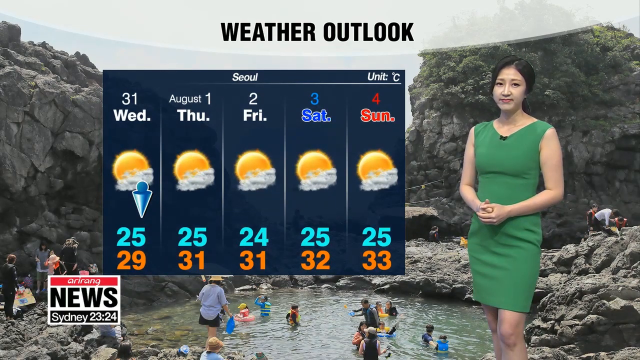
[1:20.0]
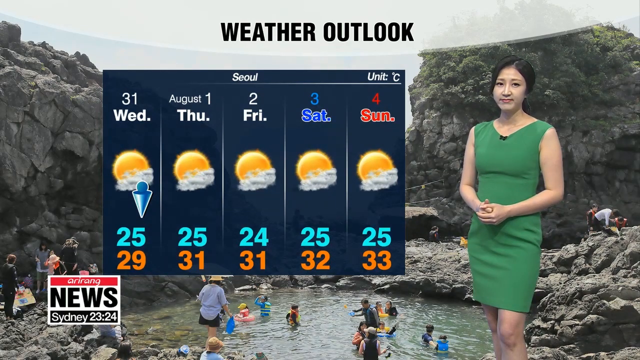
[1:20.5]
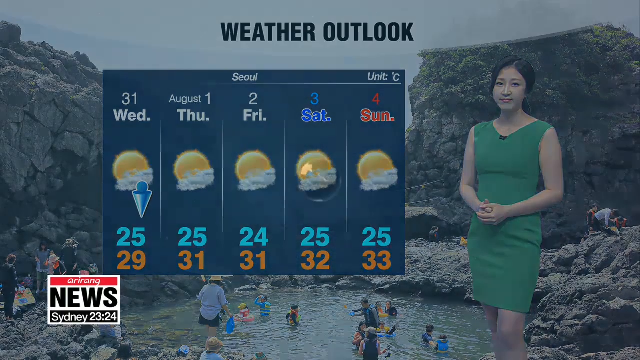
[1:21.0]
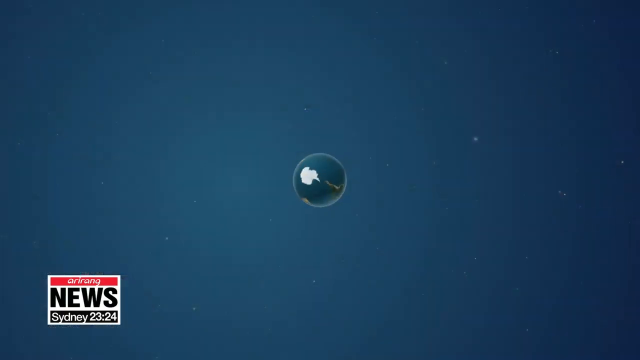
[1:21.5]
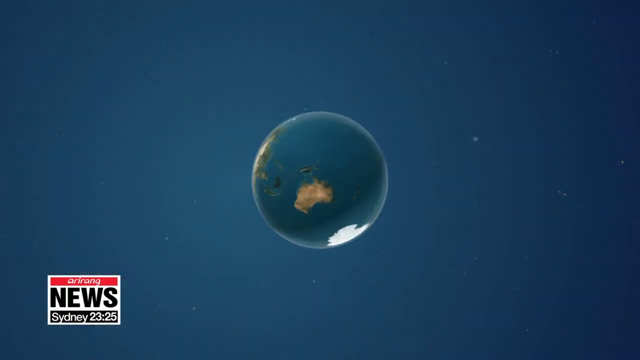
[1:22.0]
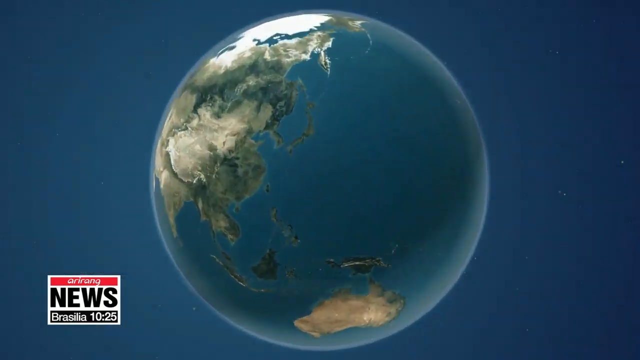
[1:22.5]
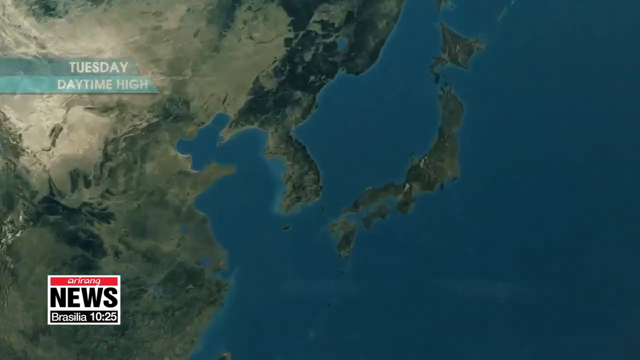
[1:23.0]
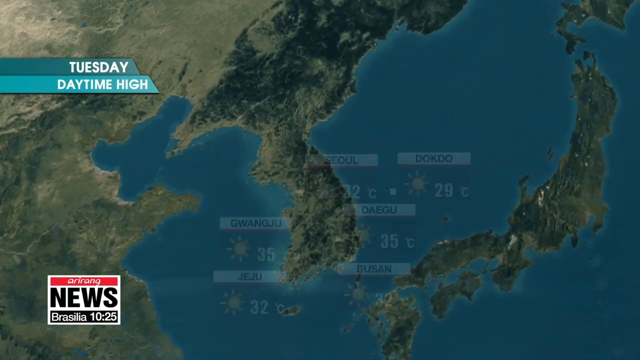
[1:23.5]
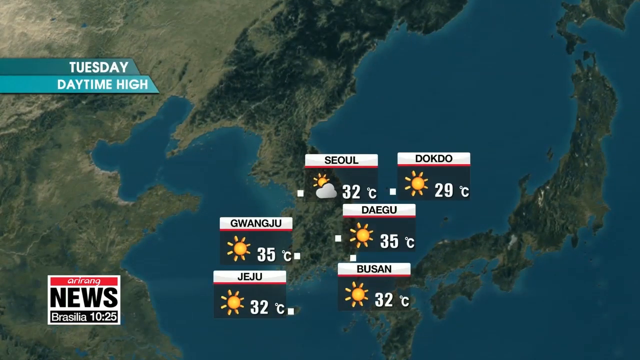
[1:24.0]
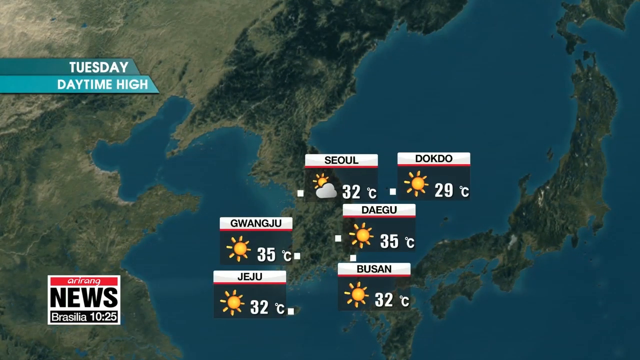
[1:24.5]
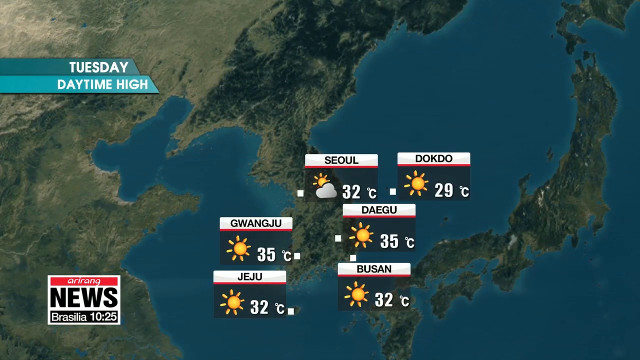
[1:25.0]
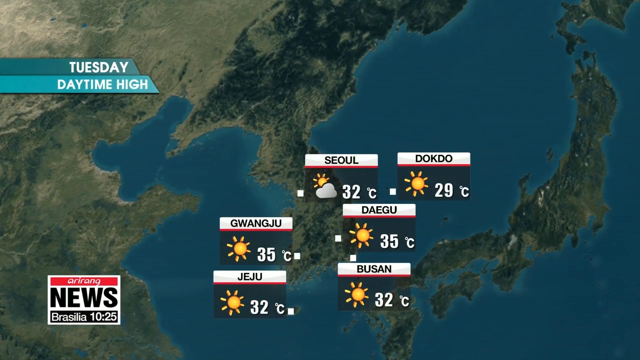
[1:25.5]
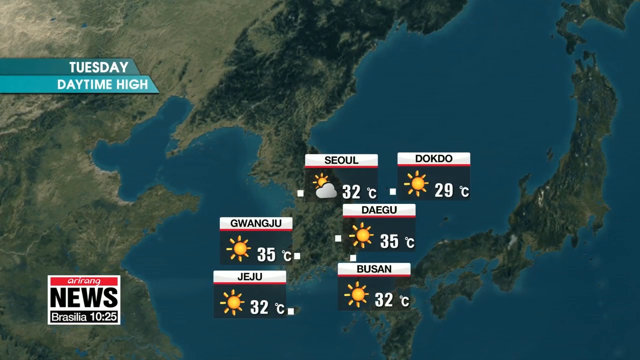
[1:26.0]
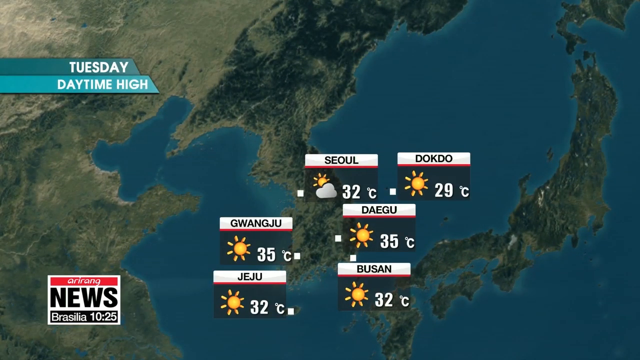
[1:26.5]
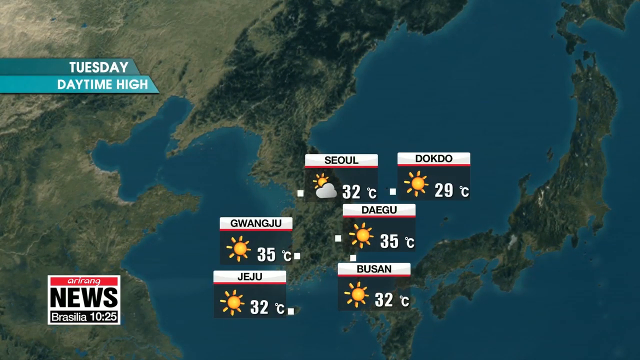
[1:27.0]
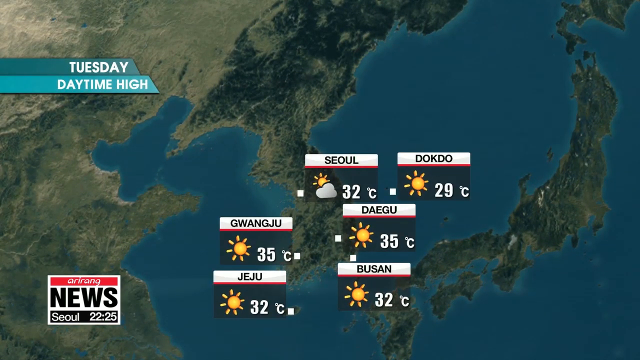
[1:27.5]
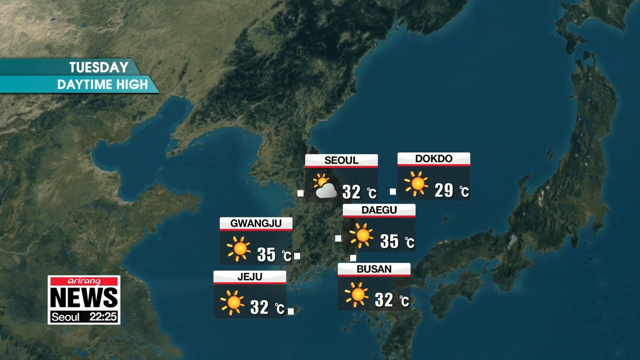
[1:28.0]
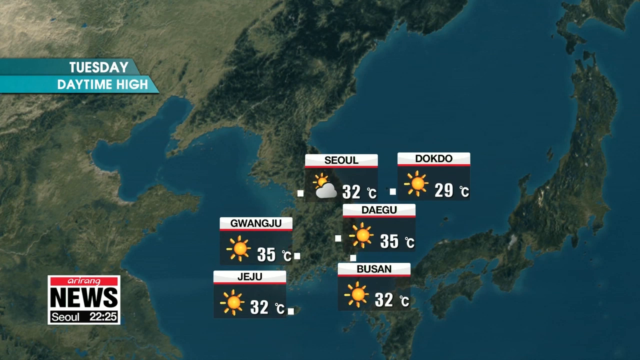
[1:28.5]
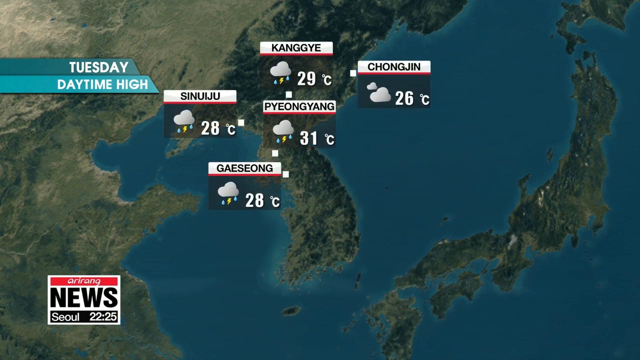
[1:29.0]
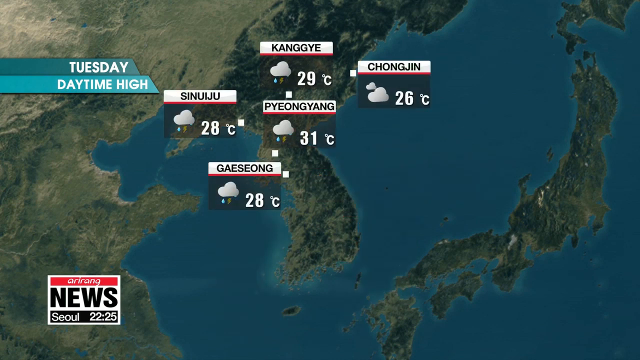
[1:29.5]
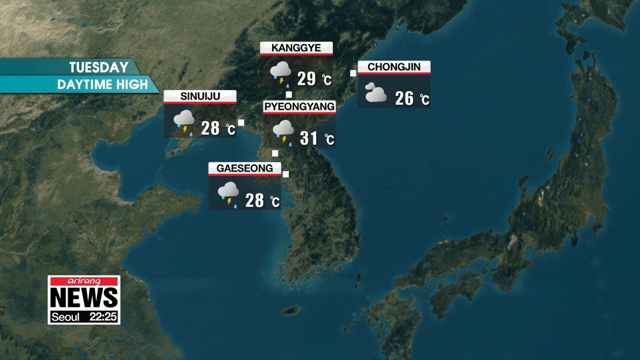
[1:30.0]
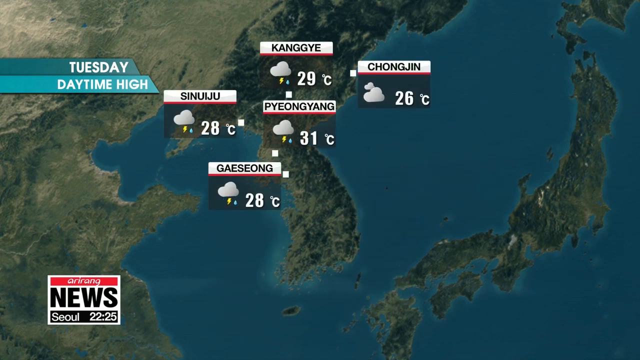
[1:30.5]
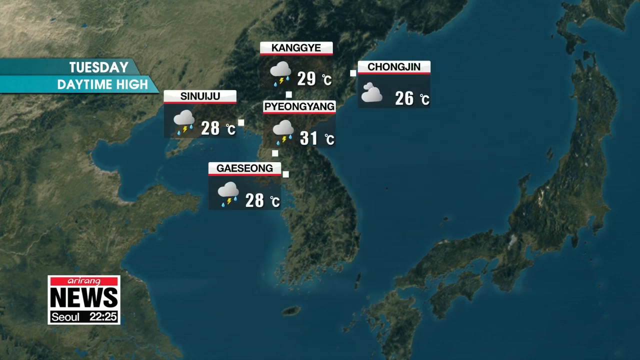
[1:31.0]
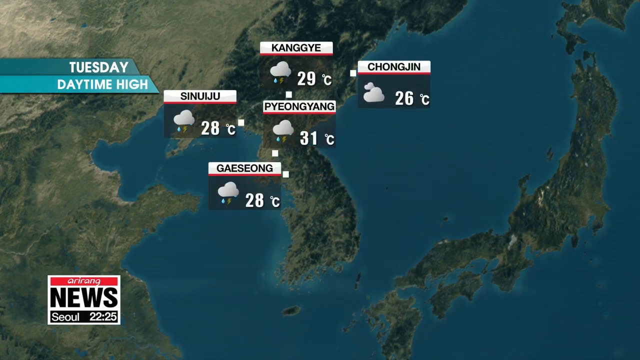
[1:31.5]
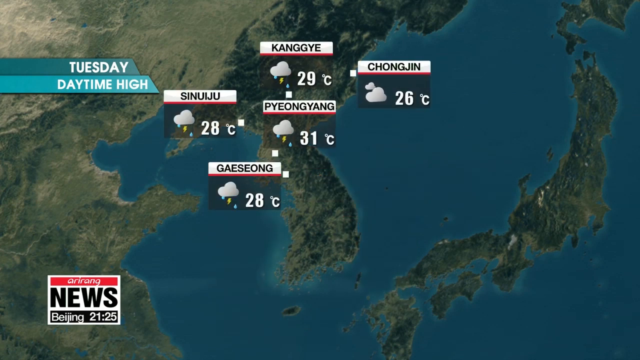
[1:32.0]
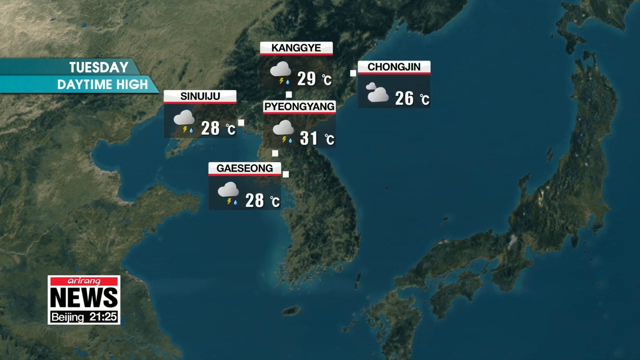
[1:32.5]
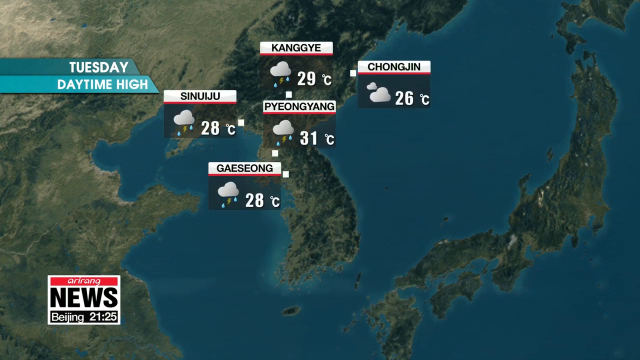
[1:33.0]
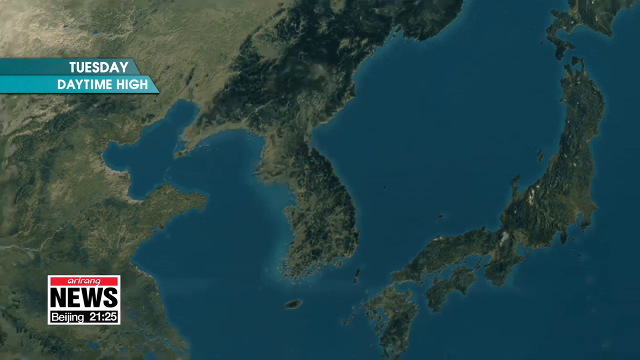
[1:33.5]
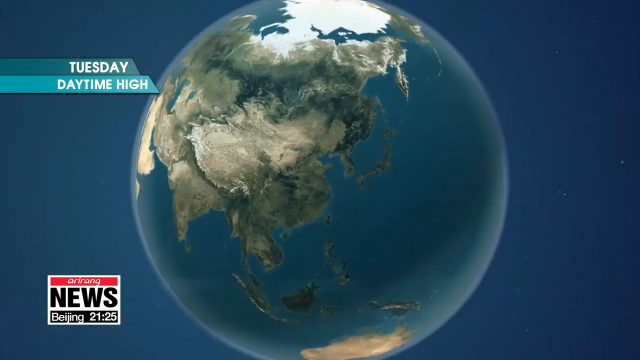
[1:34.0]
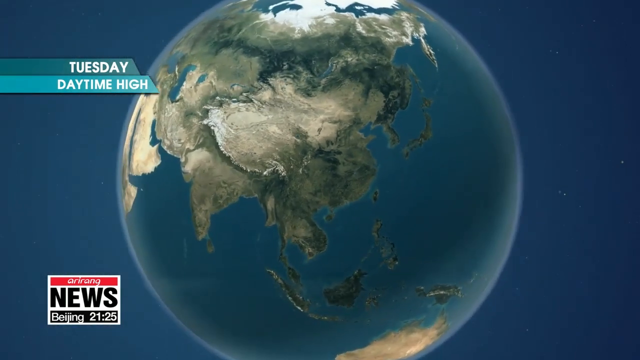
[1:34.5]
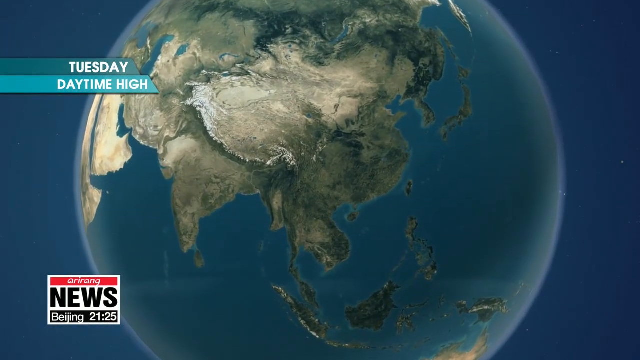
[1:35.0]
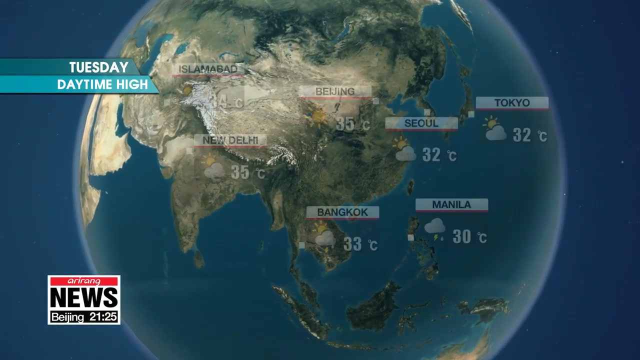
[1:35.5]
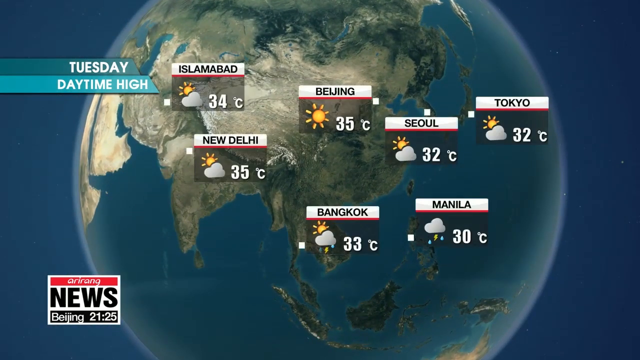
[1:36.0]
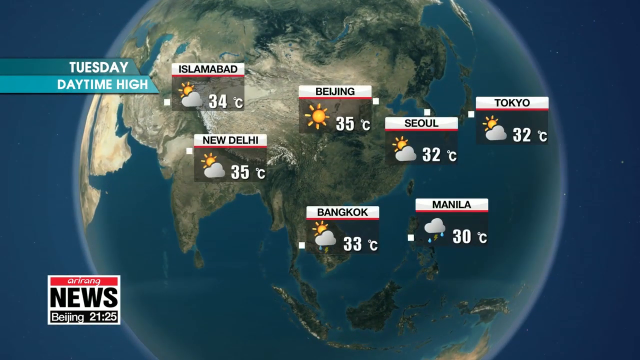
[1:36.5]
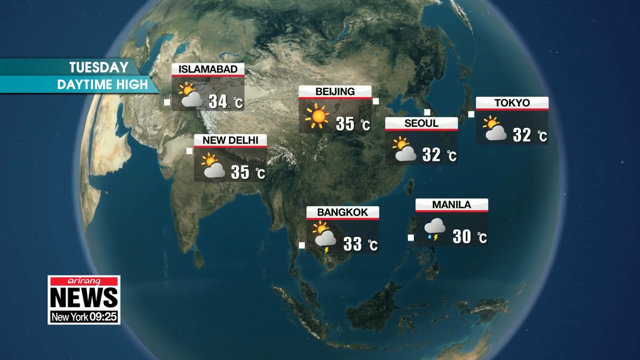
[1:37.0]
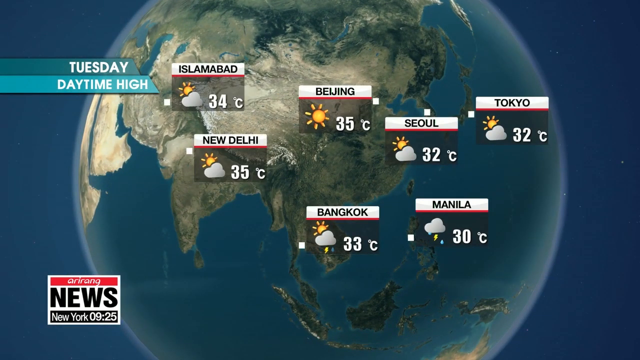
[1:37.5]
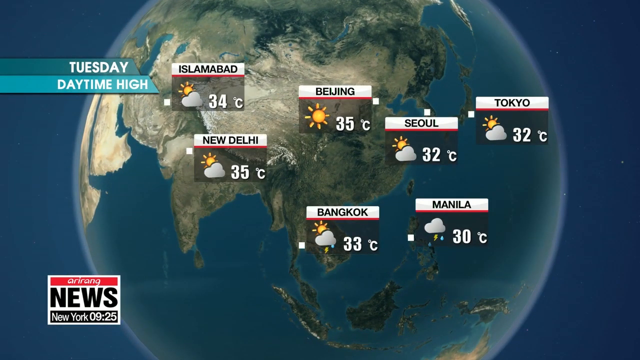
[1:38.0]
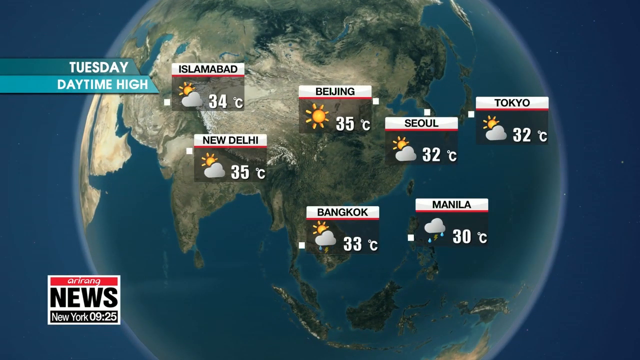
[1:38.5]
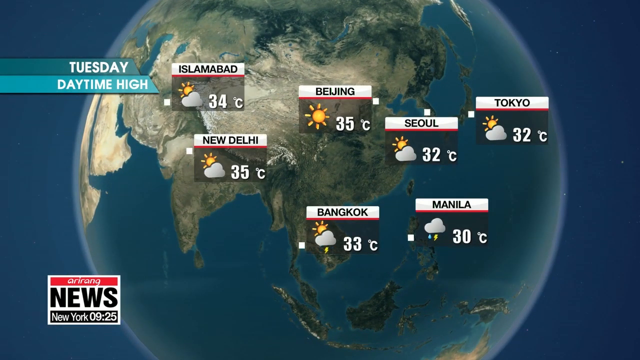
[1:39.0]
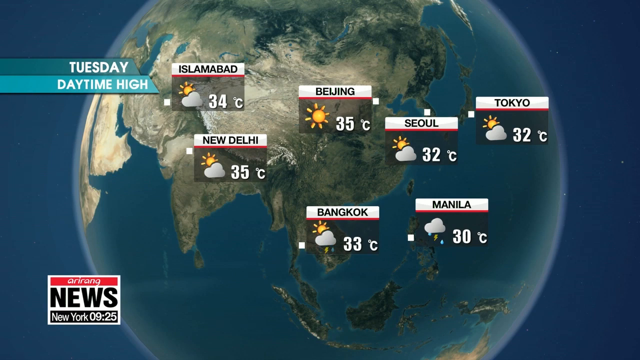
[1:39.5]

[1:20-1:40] Something that looks like an earth zooms in on one side, showing places such as New Delhi, then zooms away and gets smaller. A weather report on it reads "Tuesday daytime high." The earth-like image zooms in and out again and shows places with their weather details. Many different weather report charts appear, changing shapes and colors.